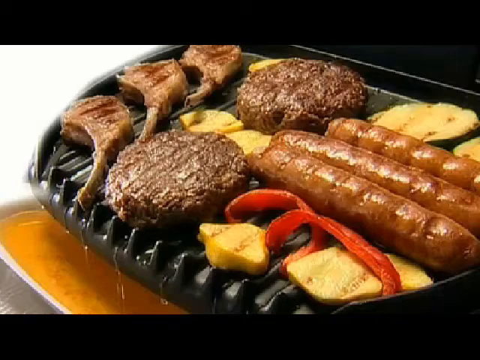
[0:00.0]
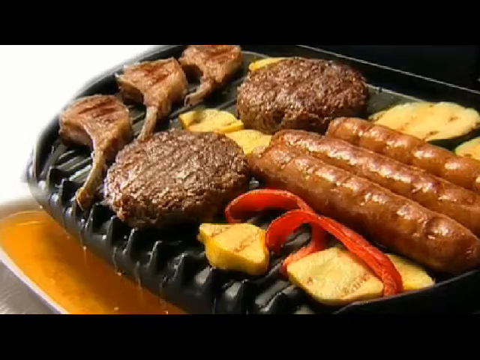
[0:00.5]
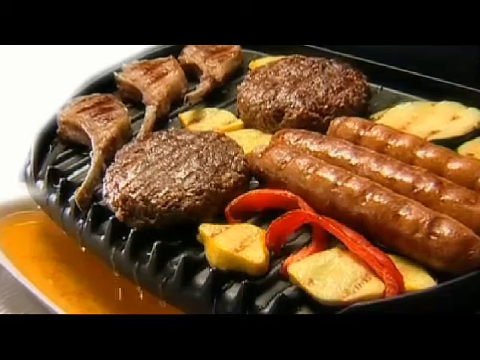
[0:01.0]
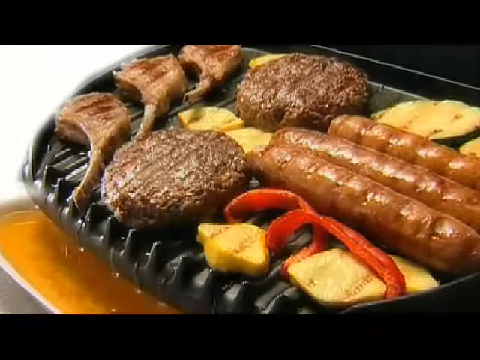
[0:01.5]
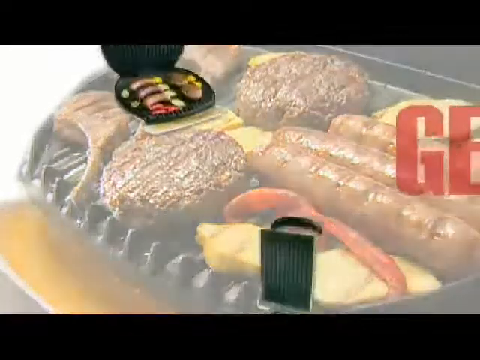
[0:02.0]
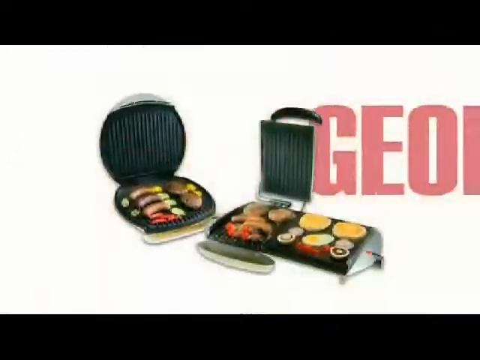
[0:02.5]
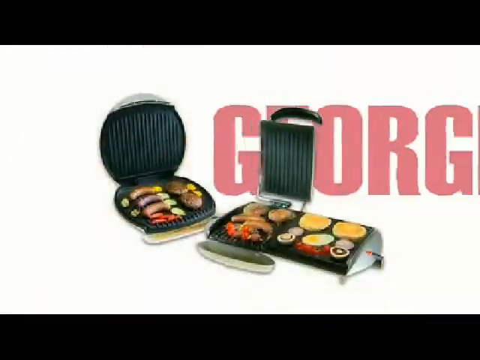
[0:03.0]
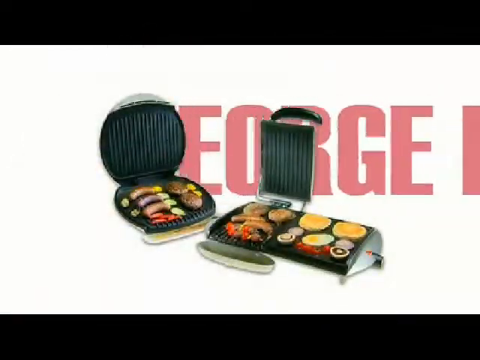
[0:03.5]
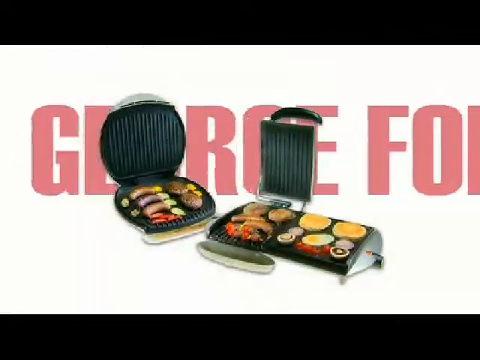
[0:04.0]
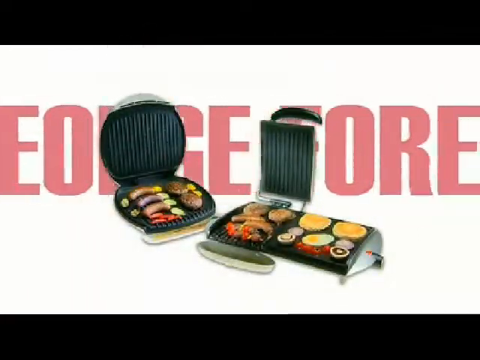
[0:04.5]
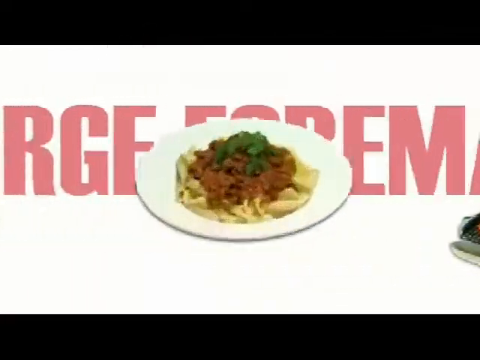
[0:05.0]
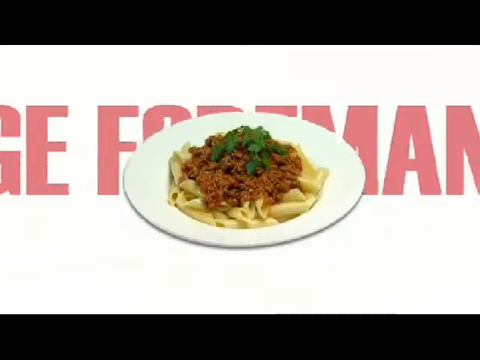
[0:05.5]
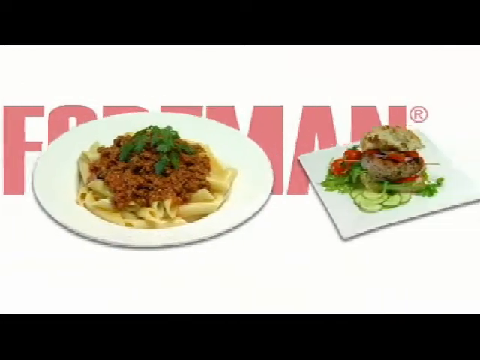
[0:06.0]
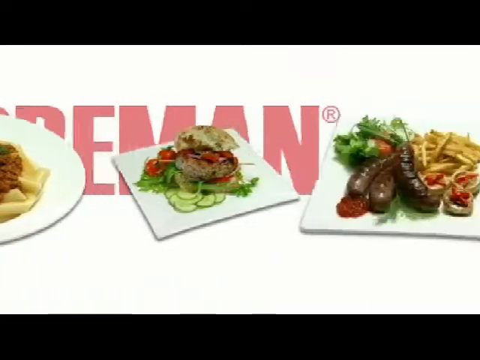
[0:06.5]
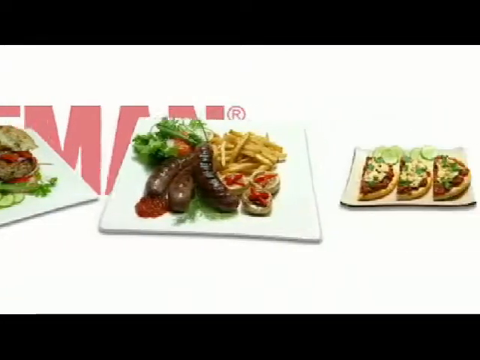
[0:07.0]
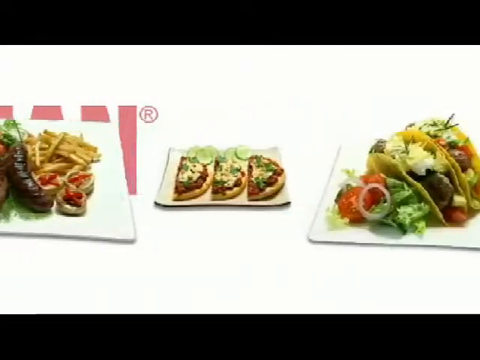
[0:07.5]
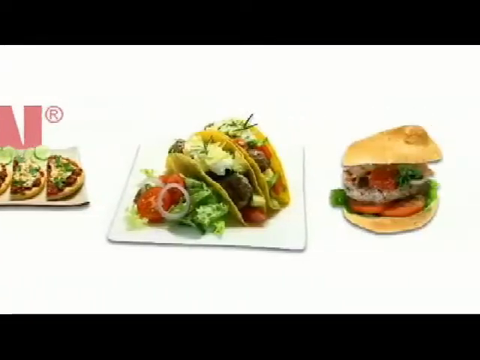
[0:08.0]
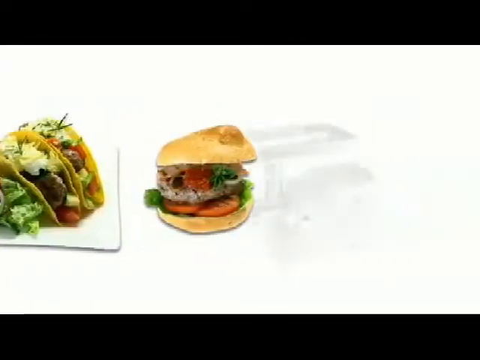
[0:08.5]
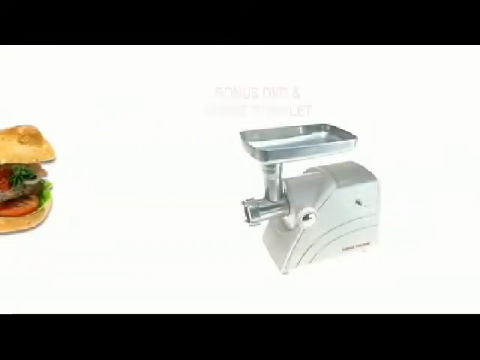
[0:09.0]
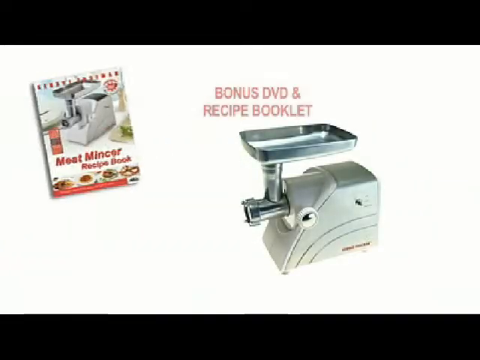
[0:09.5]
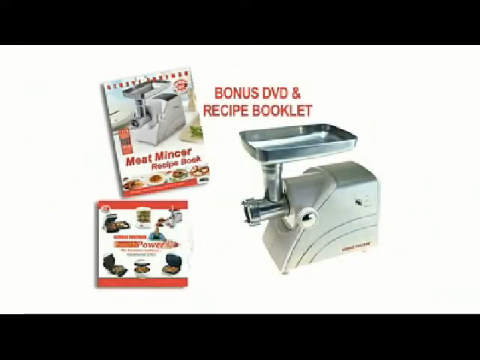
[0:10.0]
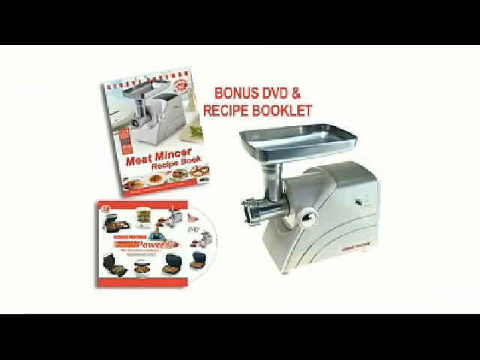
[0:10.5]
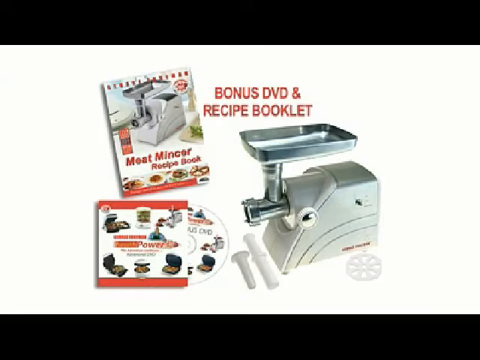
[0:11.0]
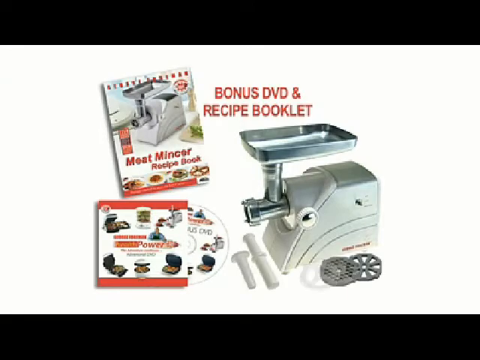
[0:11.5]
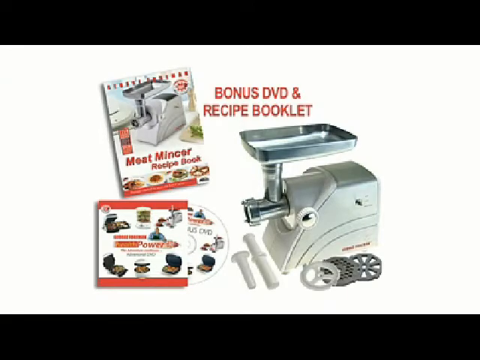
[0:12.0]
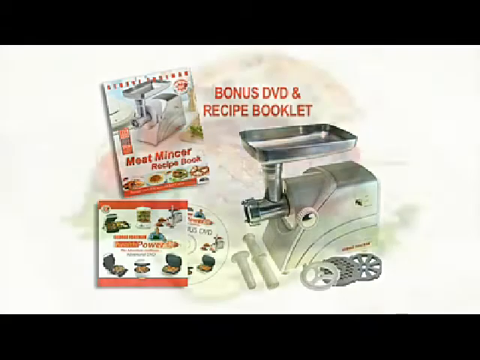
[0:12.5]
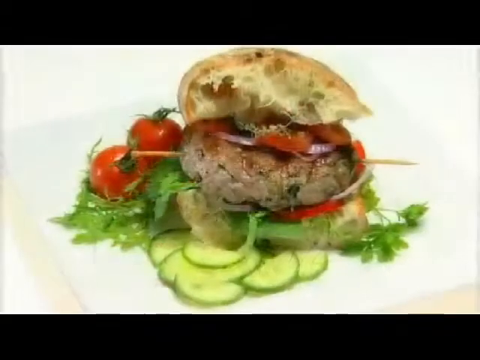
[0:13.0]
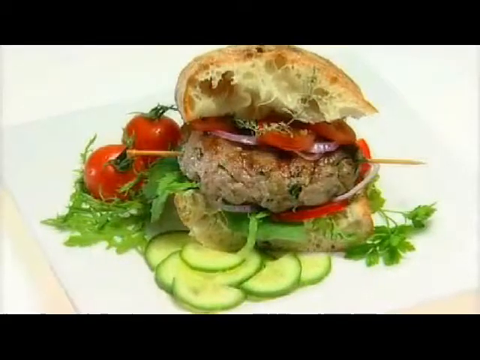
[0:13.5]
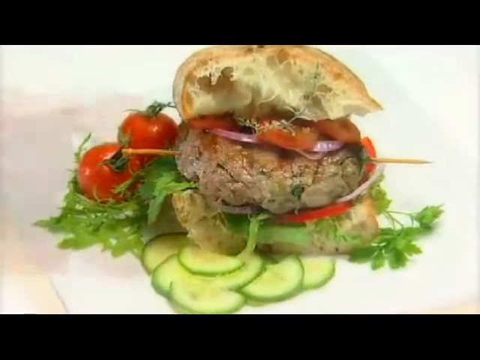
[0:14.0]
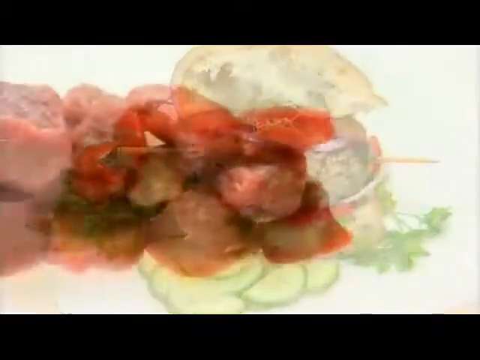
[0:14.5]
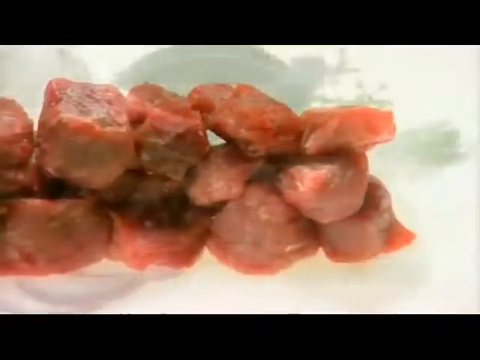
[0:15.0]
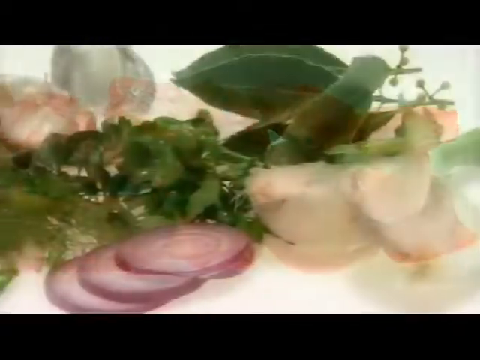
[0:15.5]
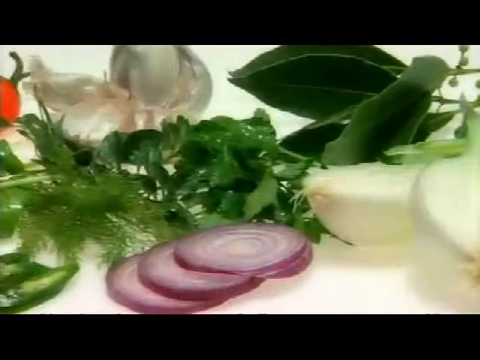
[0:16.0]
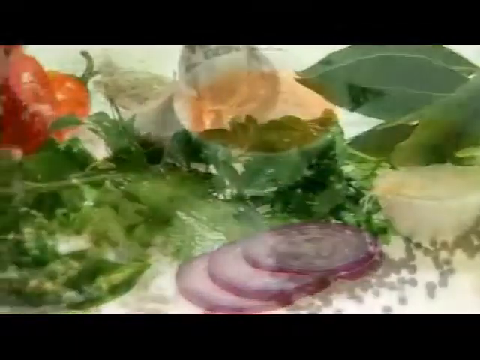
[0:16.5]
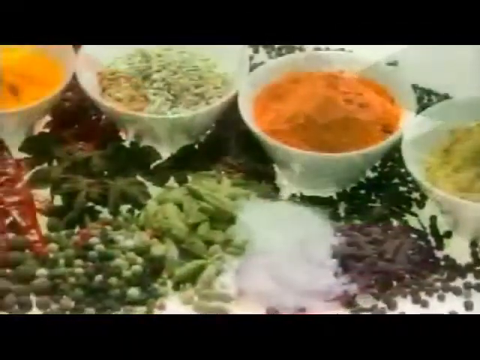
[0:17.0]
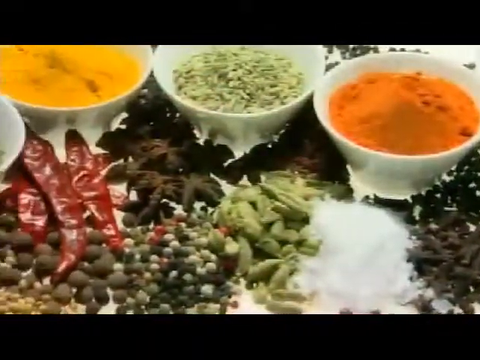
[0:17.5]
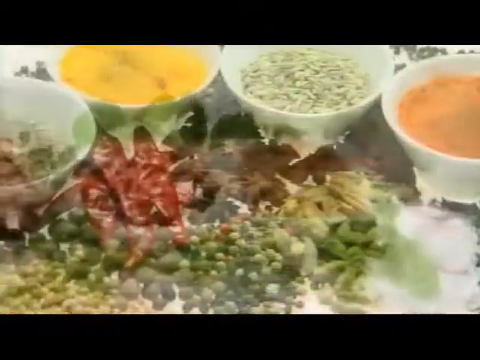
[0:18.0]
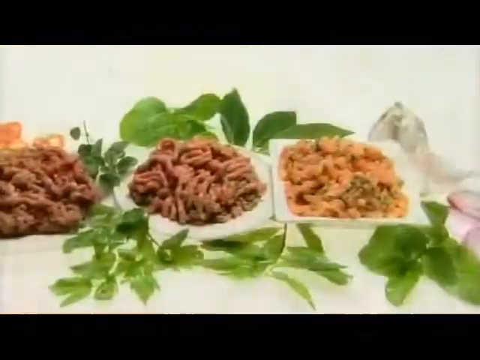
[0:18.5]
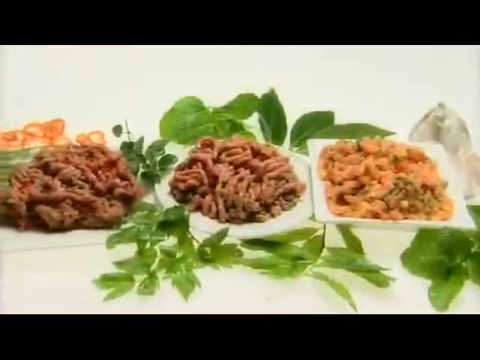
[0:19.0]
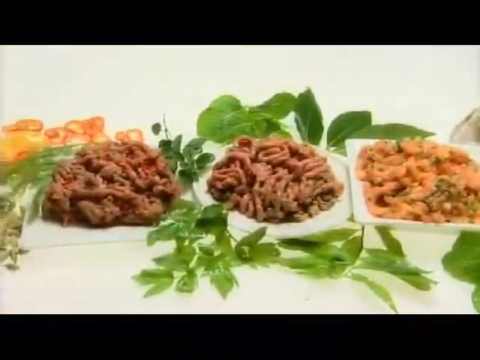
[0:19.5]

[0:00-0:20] The video opens on a George Foreman grill with hamburgers and pieces of what looks like lamb. The George Foreman logo appears on the screen, and the video shows the types of things that can be made. There is a bonus DVD and recipe booklet for what is apparently a new device called the meat mincer, which has a tray on top and small cutting blades, and meat can be stuffed down into it. A burger made on the George Foreman grill is shown on some type of brioche bun with pickles, whole tomatoes and pieces of lettuce. The burger is fairly large, and a giant toothpick goes through the hamburger patty. The shot ends on pictures of vegetables, fish kebab and ground meat.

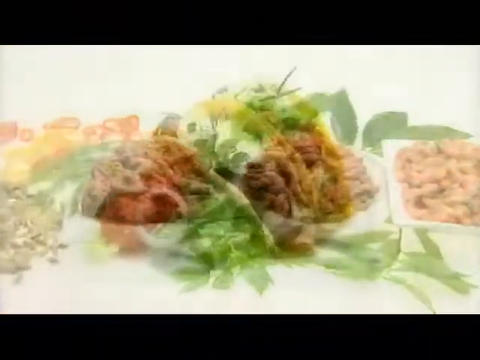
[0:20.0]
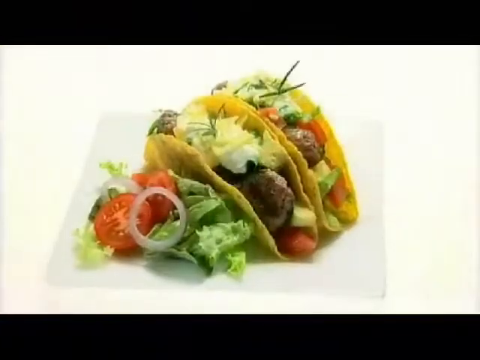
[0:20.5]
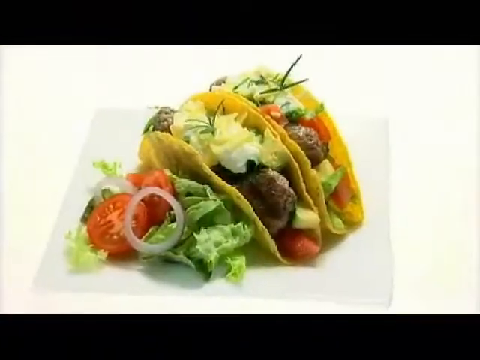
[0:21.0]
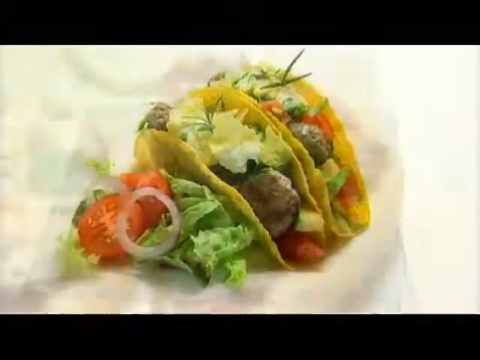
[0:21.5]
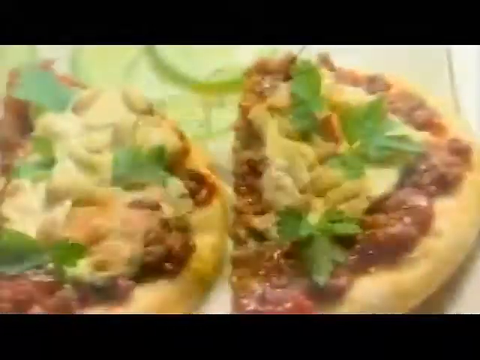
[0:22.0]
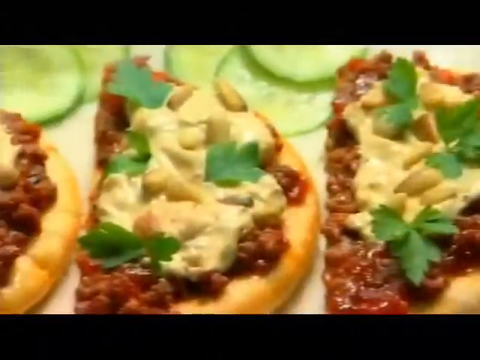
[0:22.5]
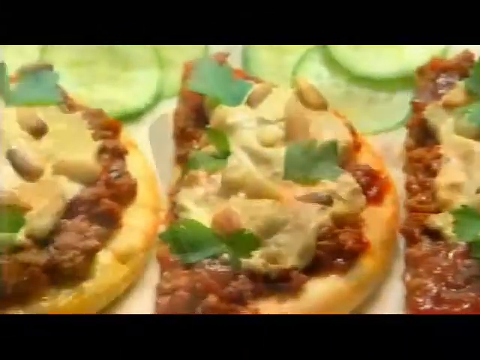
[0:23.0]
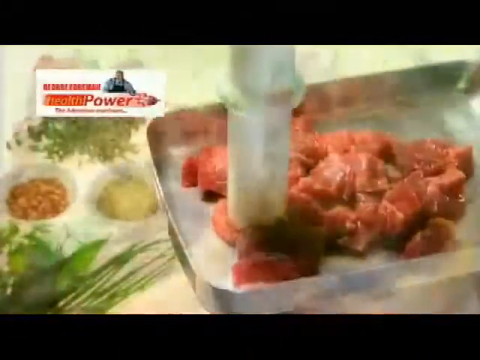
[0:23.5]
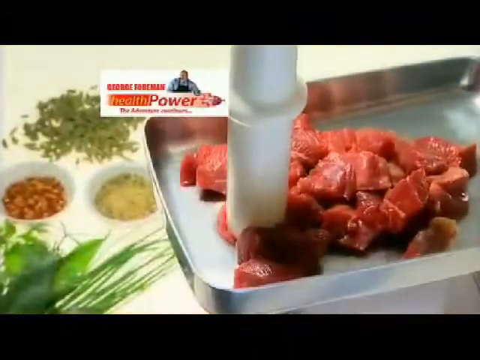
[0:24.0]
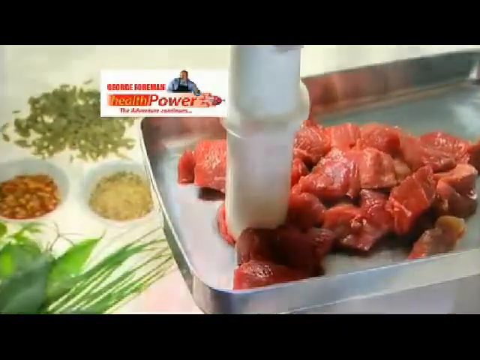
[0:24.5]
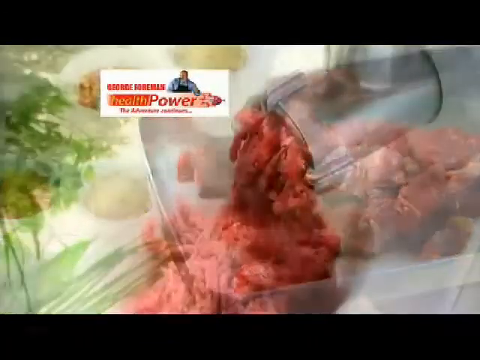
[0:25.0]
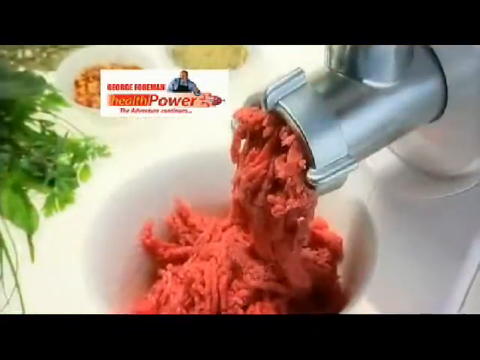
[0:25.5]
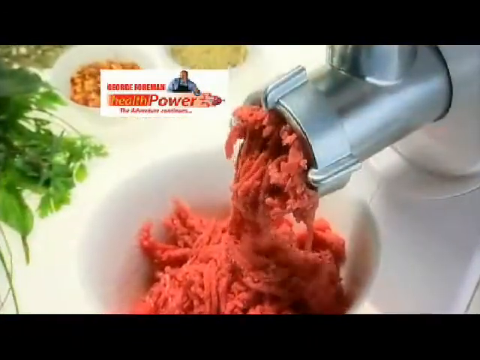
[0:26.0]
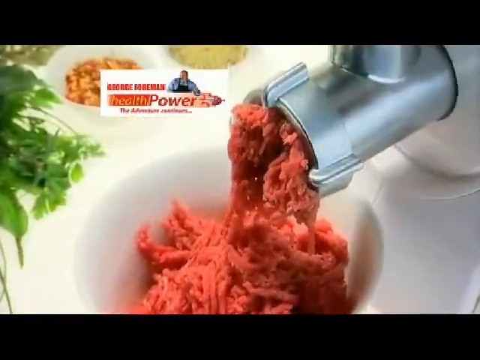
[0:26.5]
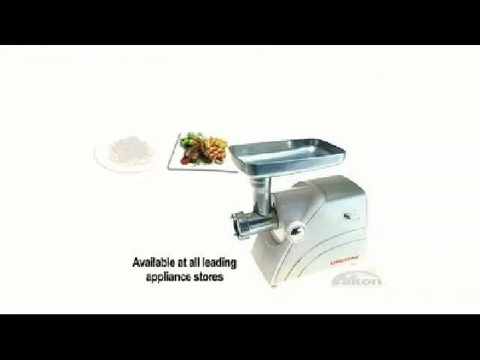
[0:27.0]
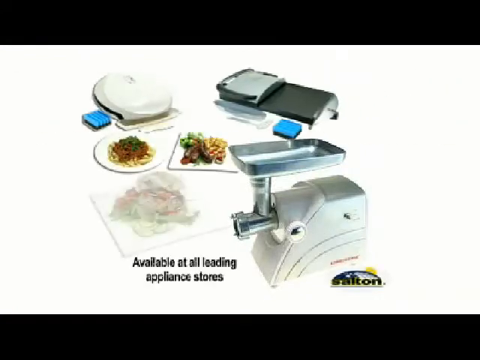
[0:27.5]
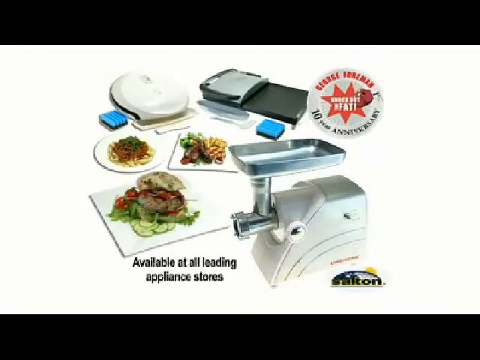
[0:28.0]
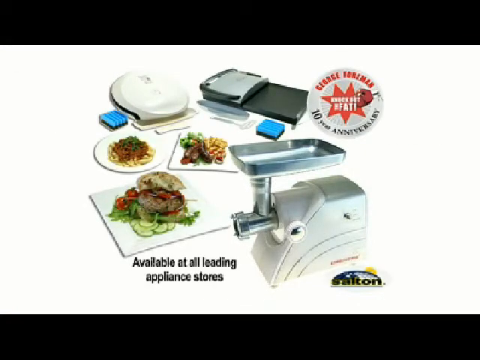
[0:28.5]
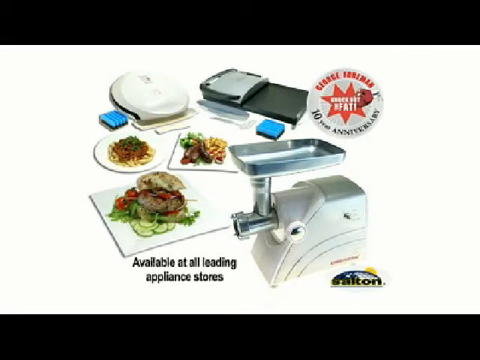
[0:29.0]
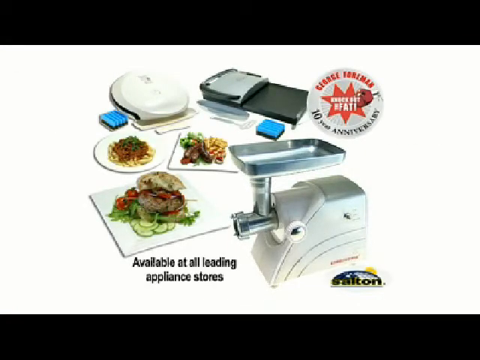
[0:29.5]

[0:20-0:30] There are pictures of ground meat, and then some sort of meatball tacos are shown. The tacos are loaded with lettuce and tomato and what looks like sour cream with a little bit of dill on top. Next comes pizza, apparently made with the meat mincing device, and streams of hamburger meat come out of the end of the meat mincer device.